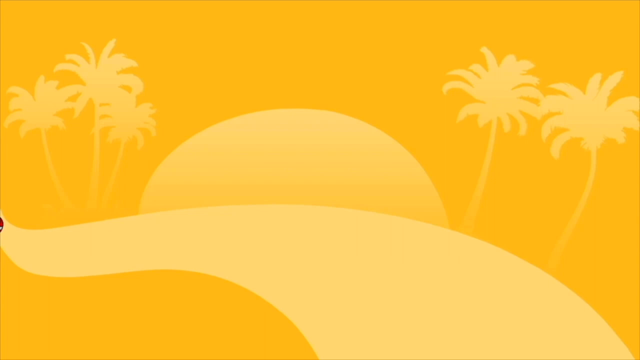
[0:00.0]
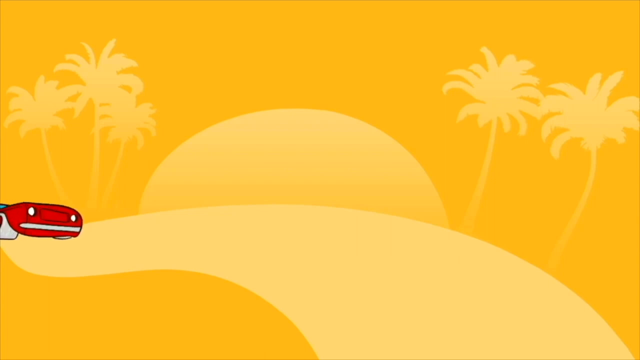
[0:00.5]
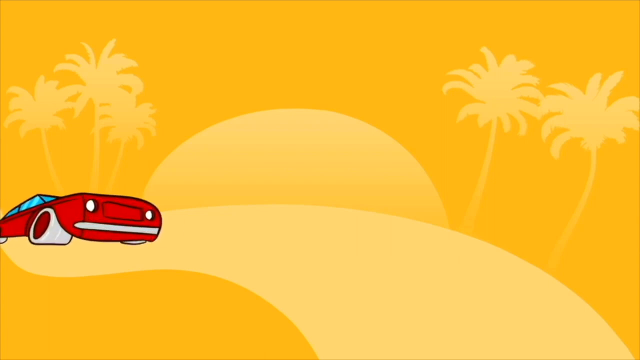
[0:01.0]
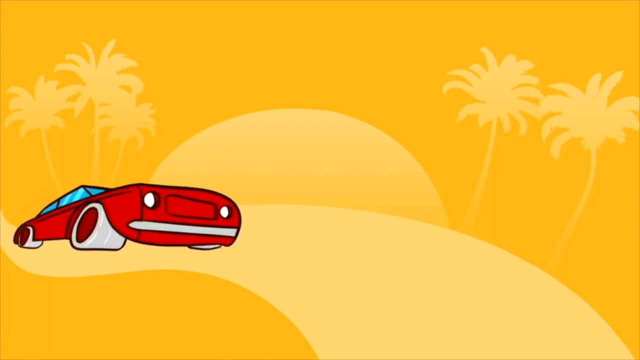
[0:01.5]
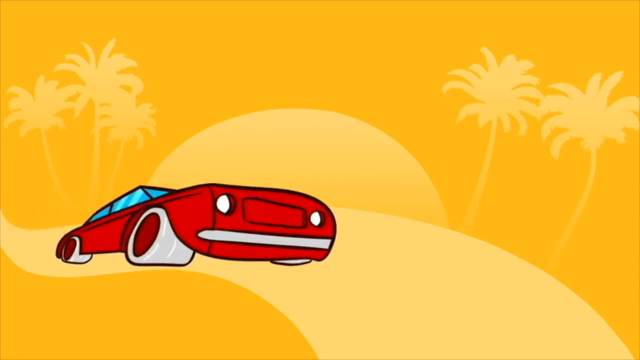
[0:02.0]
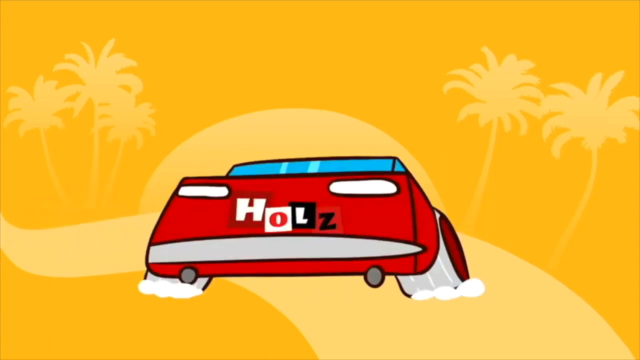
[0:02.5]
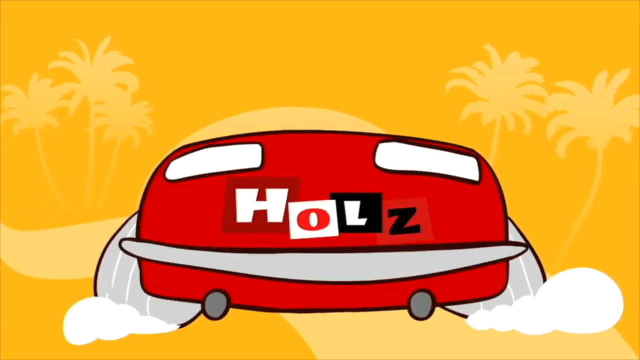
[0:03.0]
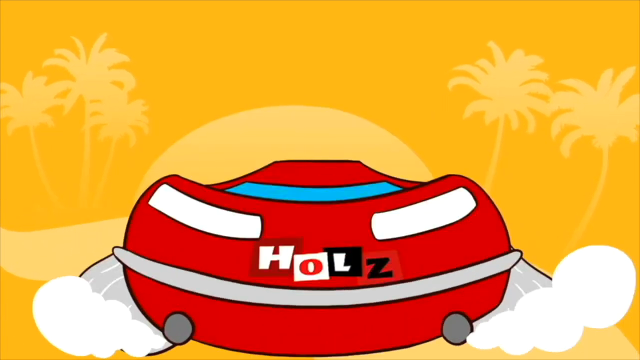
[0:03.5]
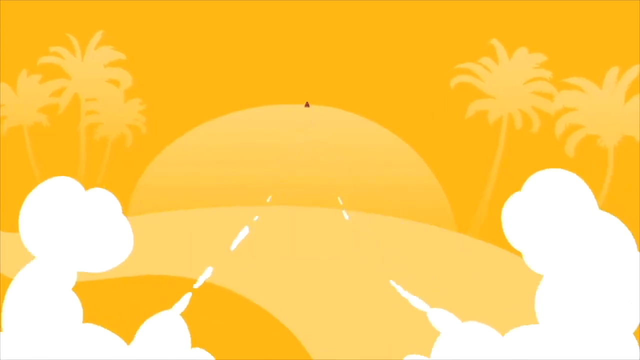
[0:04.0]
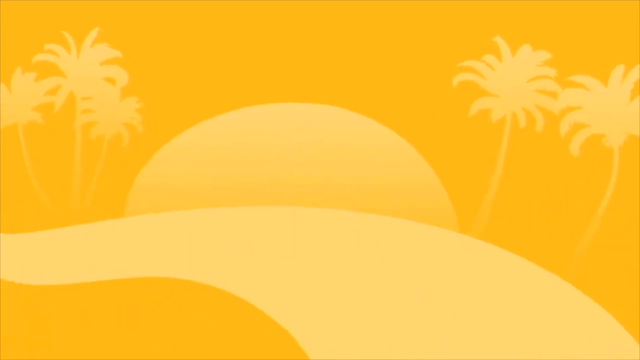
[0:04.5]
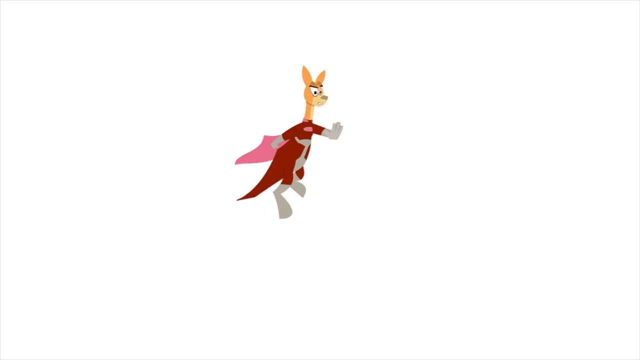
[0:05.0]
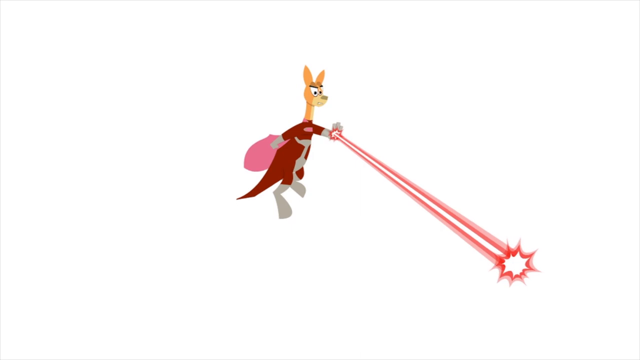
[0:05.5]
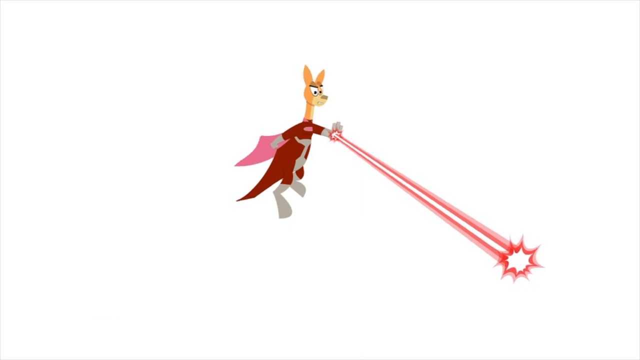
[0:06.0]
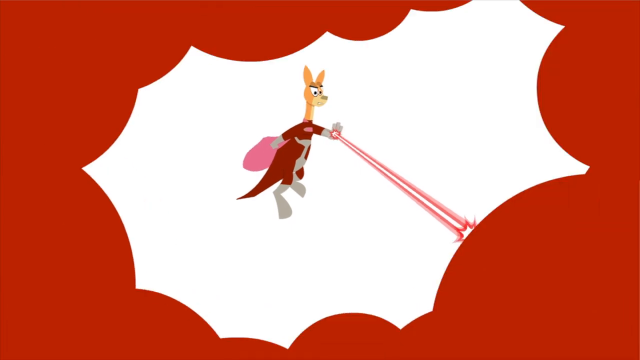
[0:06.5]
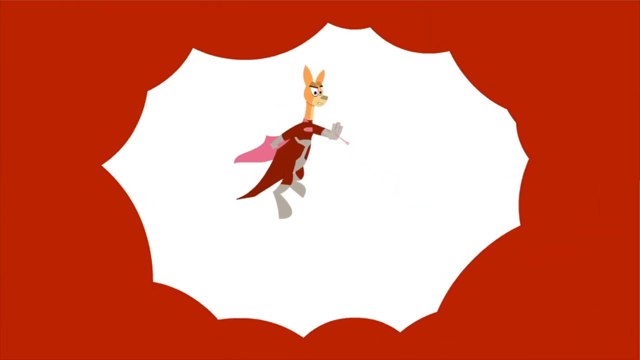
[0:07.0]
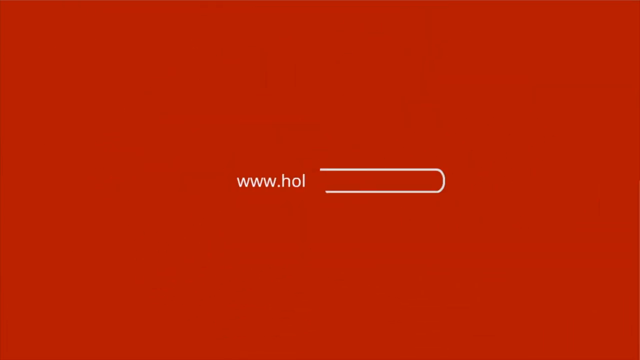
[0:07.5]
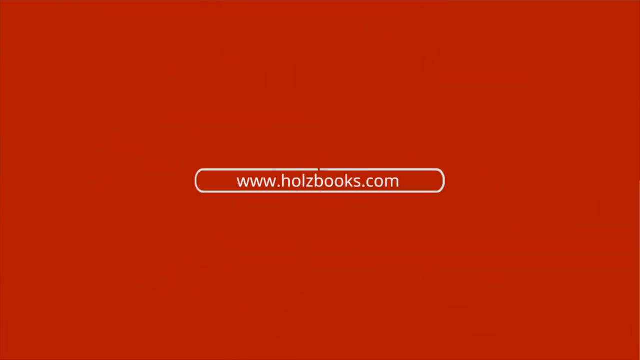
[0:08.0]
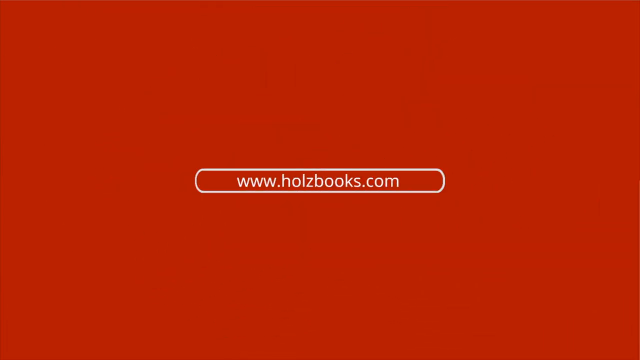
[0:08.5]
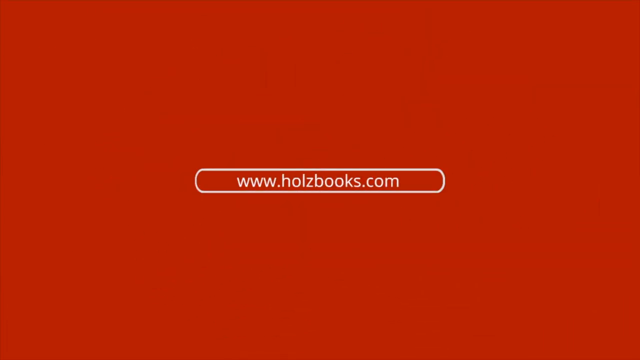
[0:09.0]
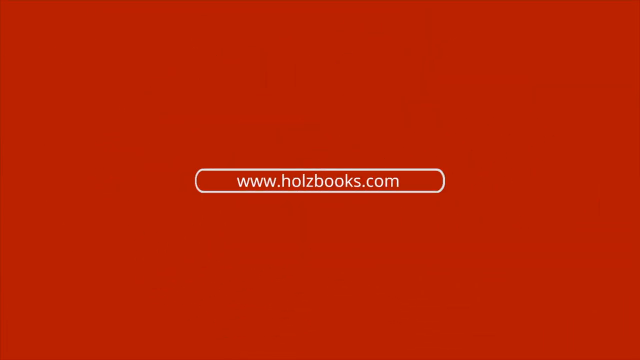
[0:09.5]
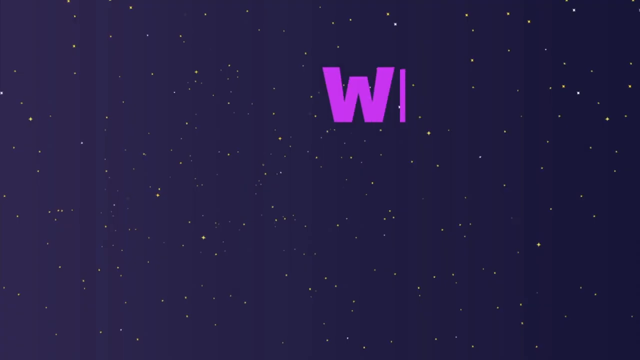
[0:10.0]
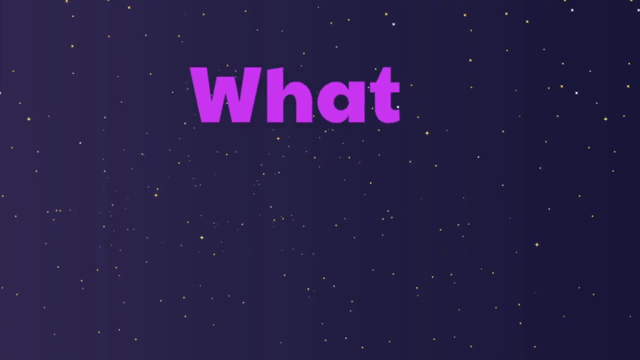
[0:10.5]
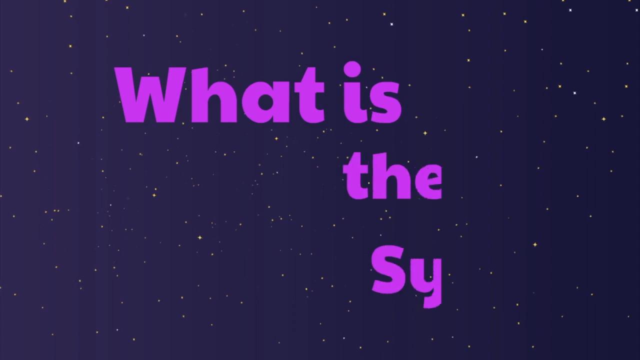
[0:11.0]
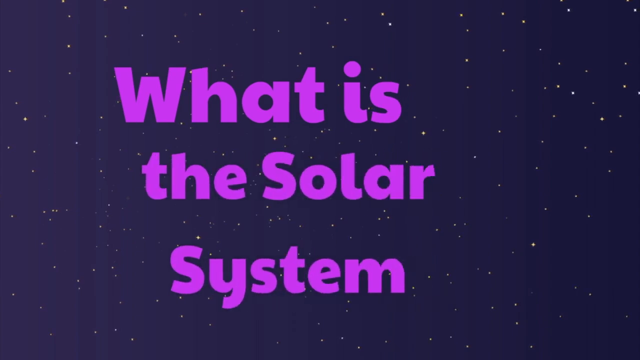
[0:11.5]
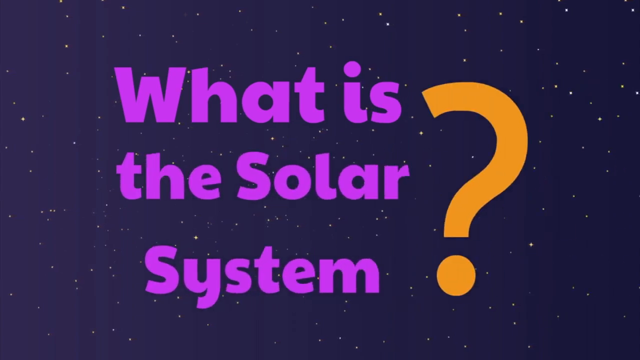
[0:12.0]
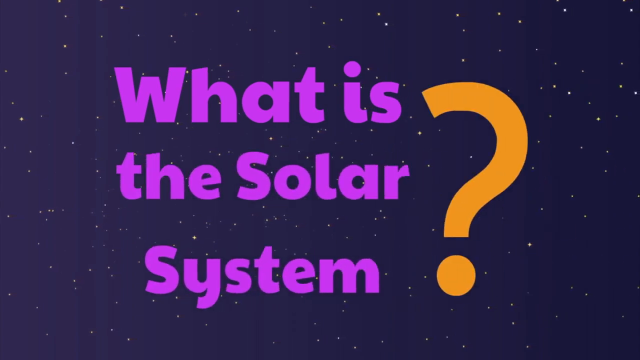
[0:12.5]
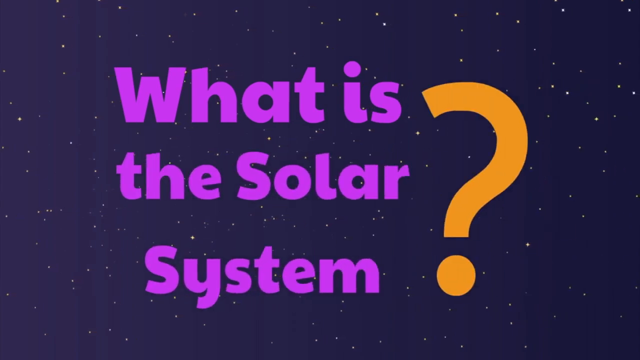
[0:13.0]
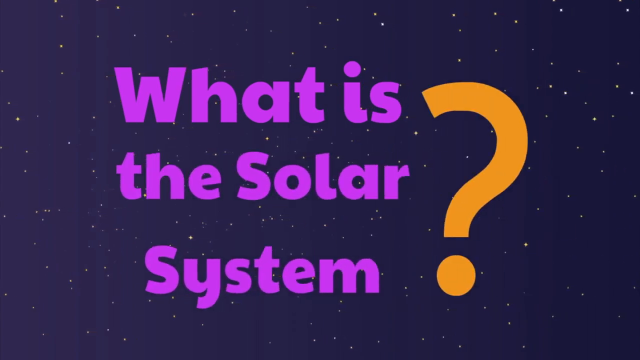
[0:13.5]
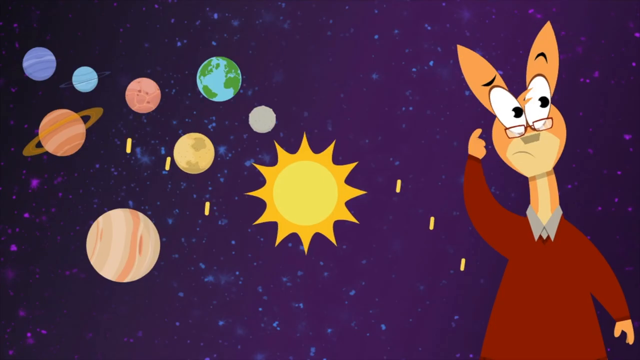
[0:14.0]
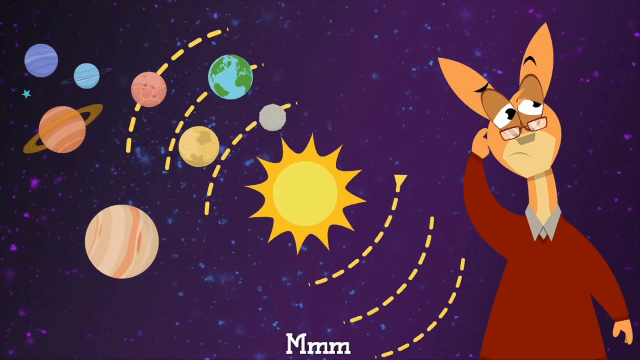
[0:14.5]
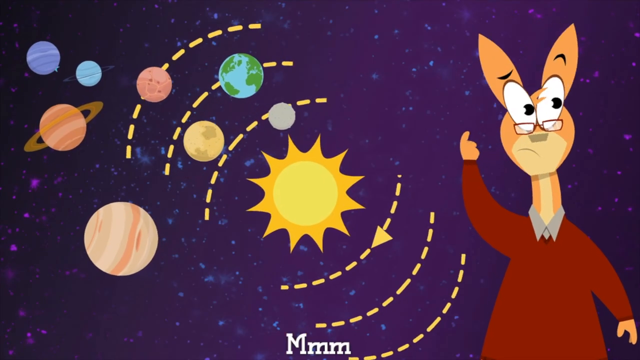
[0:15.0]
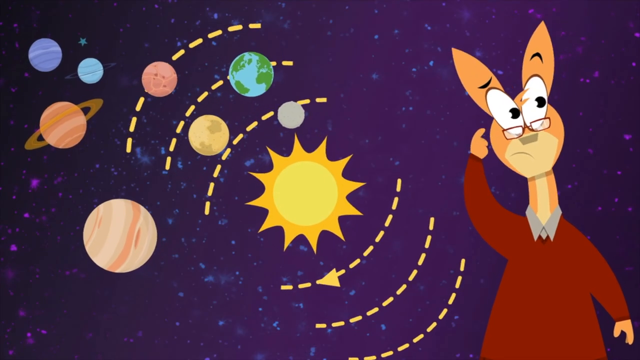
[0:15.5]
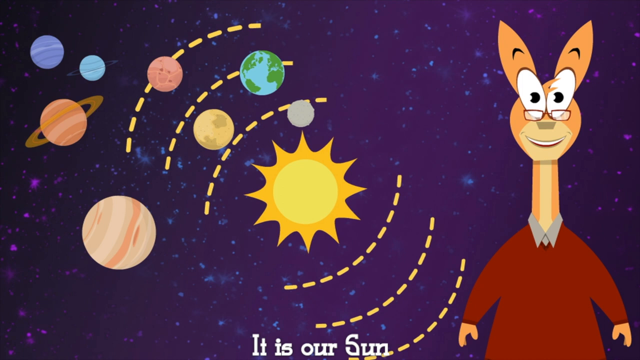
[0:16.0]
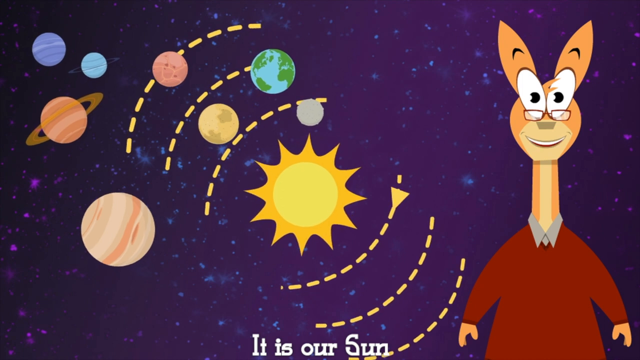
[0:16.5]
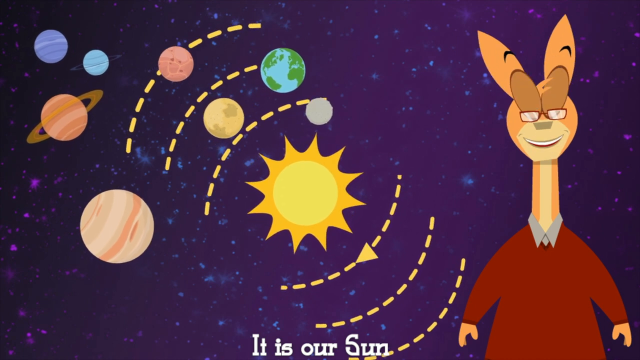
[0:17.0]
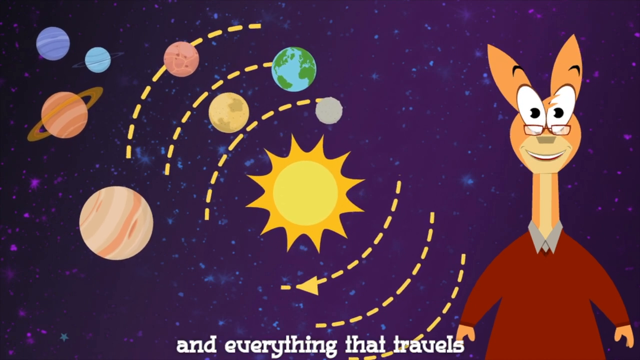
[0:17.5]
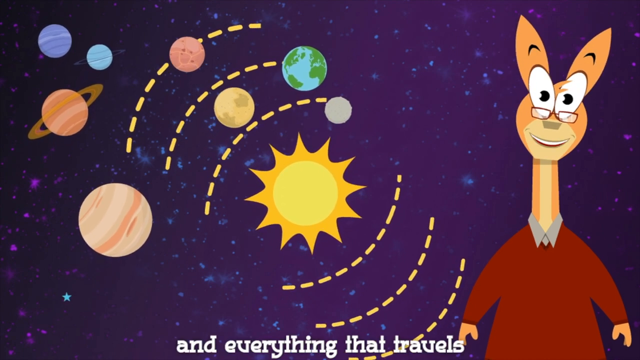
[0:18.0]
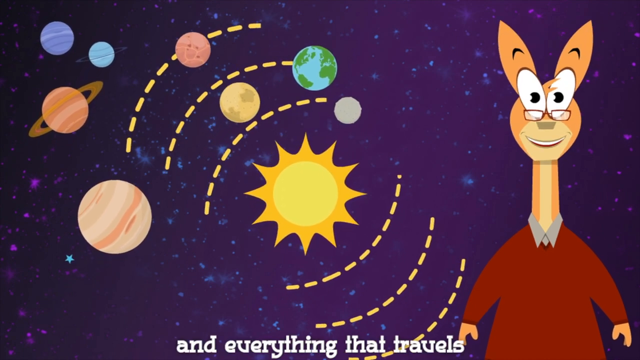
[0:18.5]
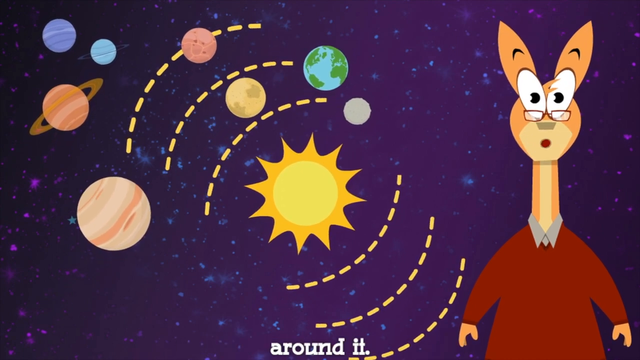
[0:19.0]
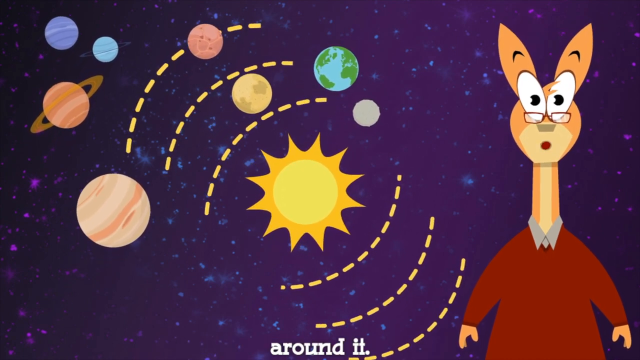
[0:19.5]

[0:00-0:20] A yellow background shows a silhouette of a moon shining over a road, which is also a silhouette, with silhouettes of palm trees on each side of the moon. In the left corner of the screen, a red cartoon car emerges. It stops suddenly and reverses into the screen; the text on the car says "holz". The car then accelerates into the moon and disappears. The scene cuts to a white screen with what appears to be an animatronic cartoon deer flying in midair and using a laser-like weapon. The deer wears a red costume, a pink cape and gray shoes. As the deer uses the laser, a red circular border emerges and forms a circle around the deer, then engulfs it. Red smoke fills the screen, and white text emerges from it reading "holzbooks.com".